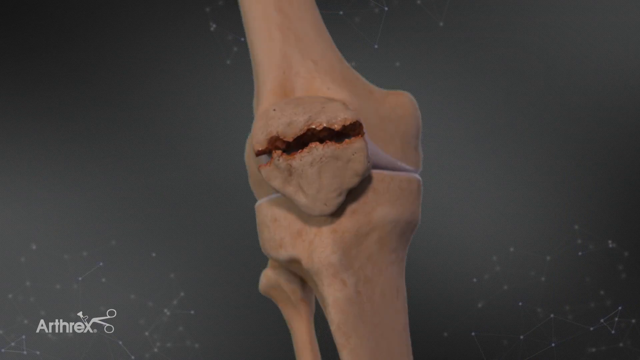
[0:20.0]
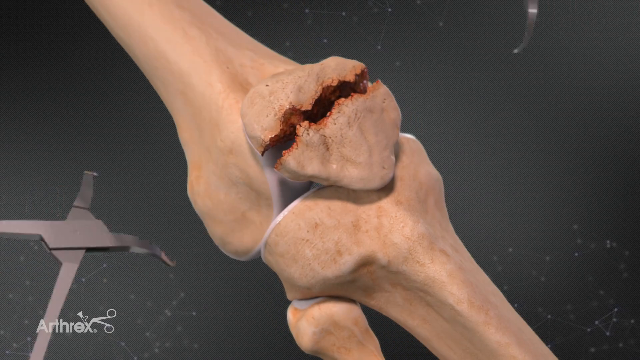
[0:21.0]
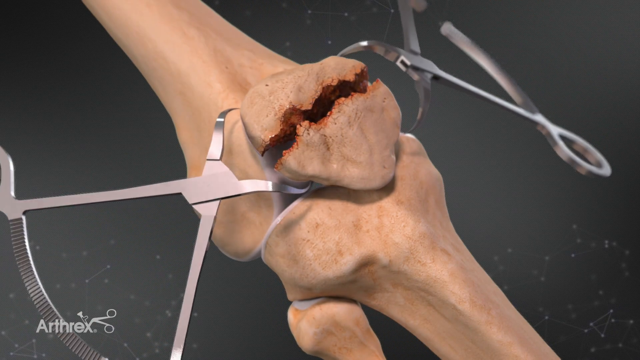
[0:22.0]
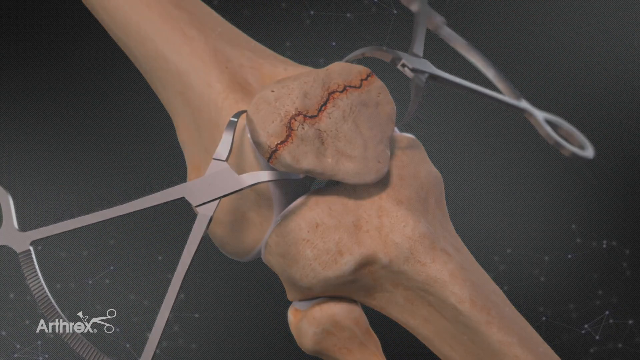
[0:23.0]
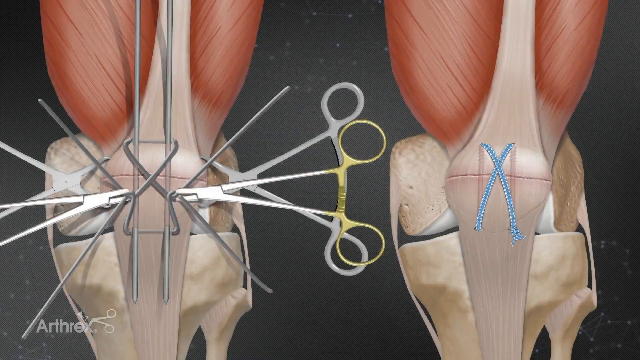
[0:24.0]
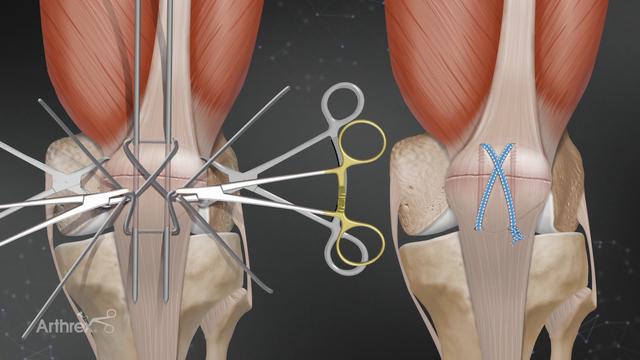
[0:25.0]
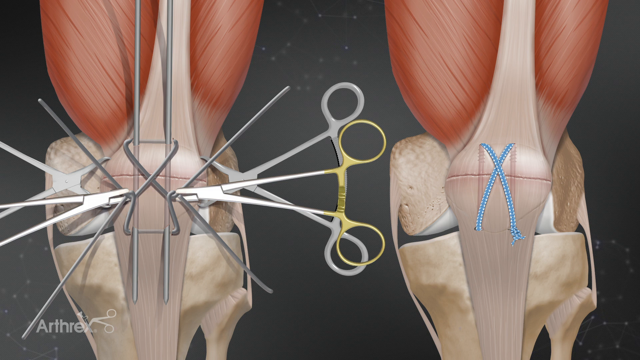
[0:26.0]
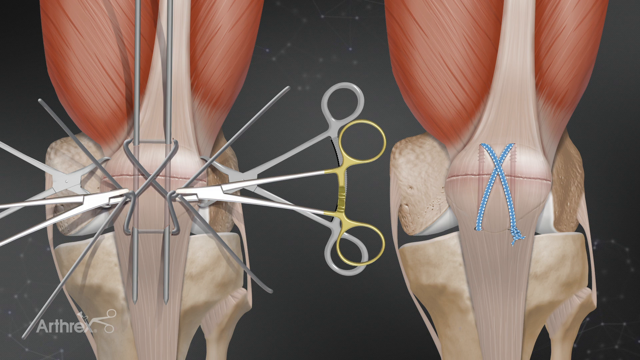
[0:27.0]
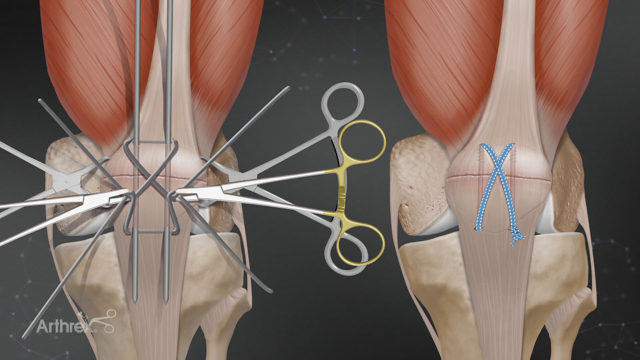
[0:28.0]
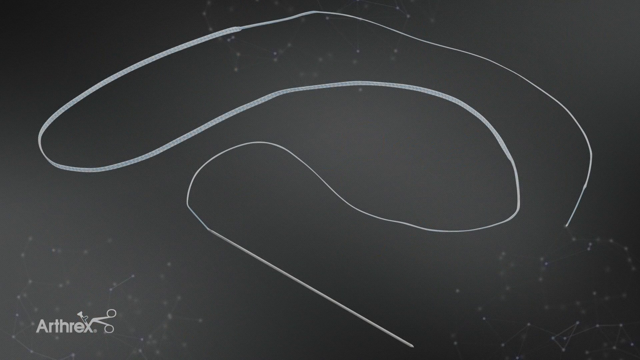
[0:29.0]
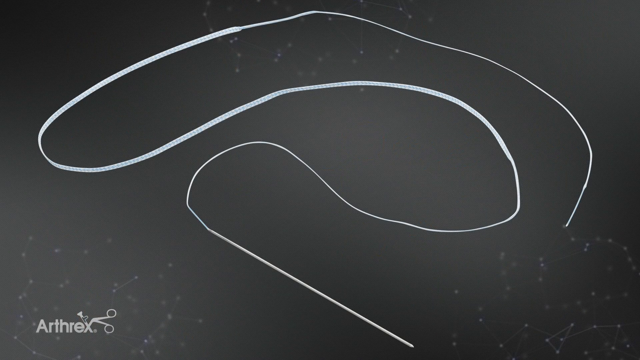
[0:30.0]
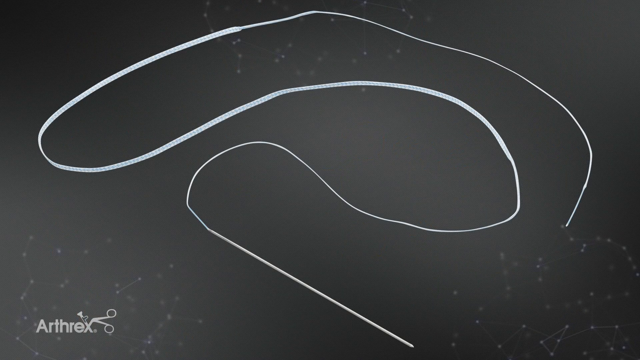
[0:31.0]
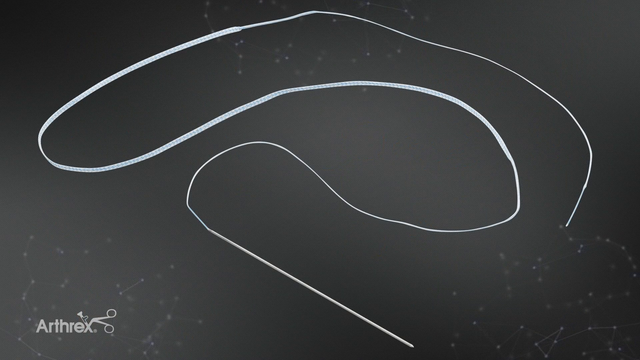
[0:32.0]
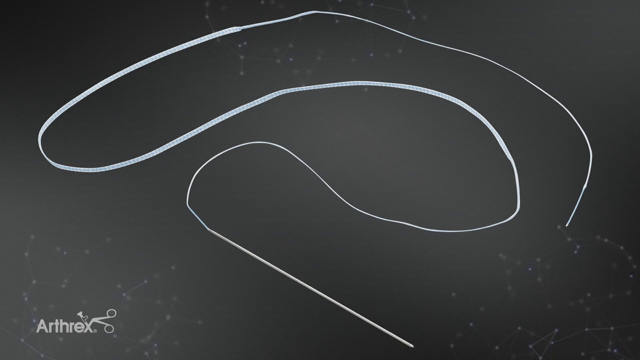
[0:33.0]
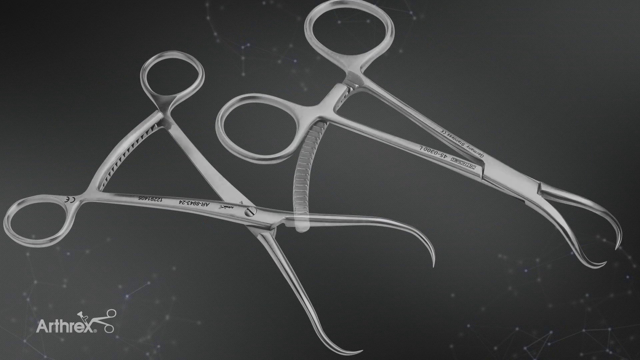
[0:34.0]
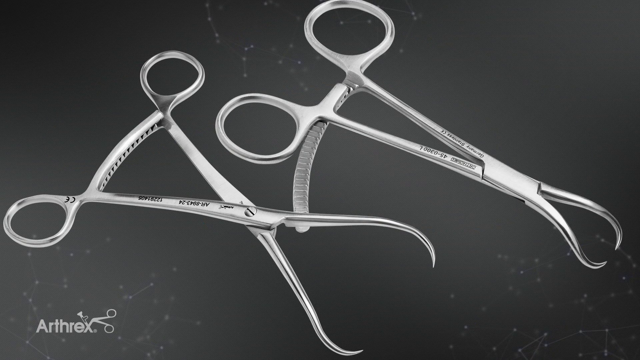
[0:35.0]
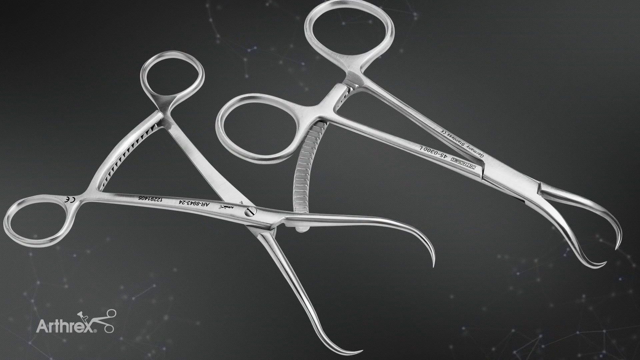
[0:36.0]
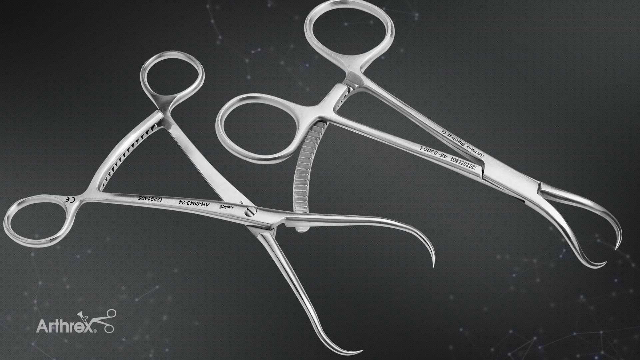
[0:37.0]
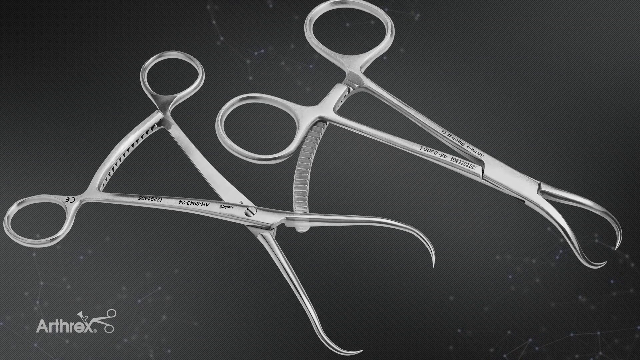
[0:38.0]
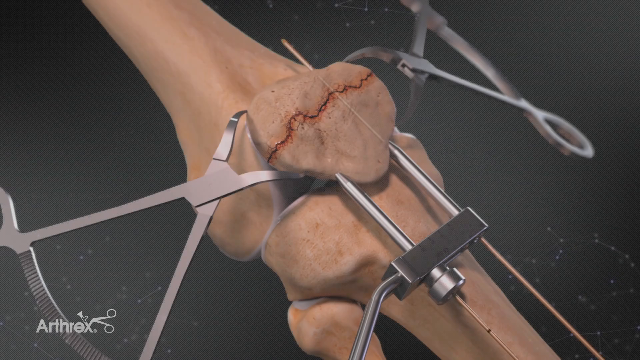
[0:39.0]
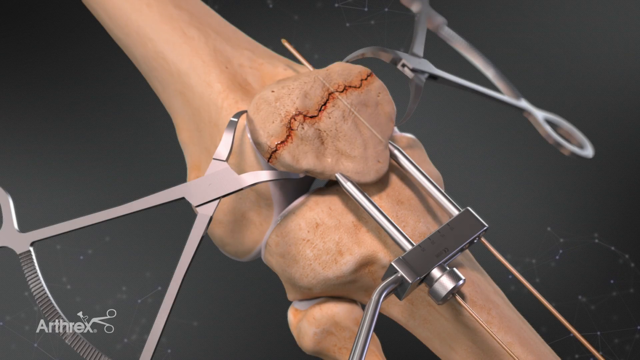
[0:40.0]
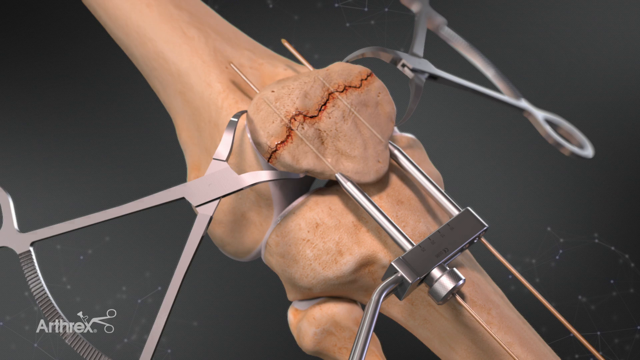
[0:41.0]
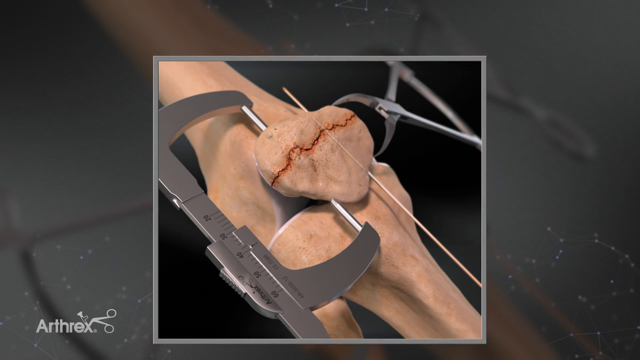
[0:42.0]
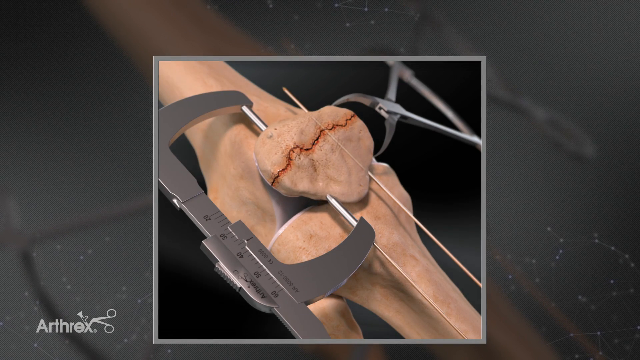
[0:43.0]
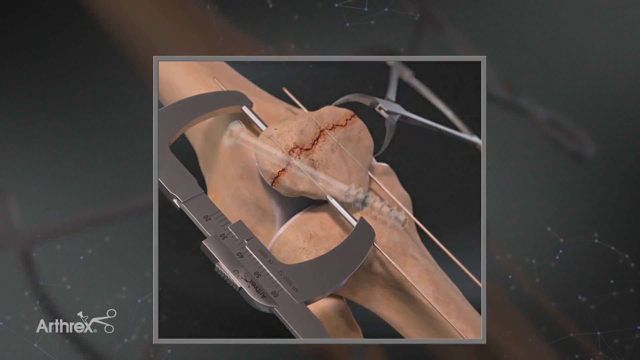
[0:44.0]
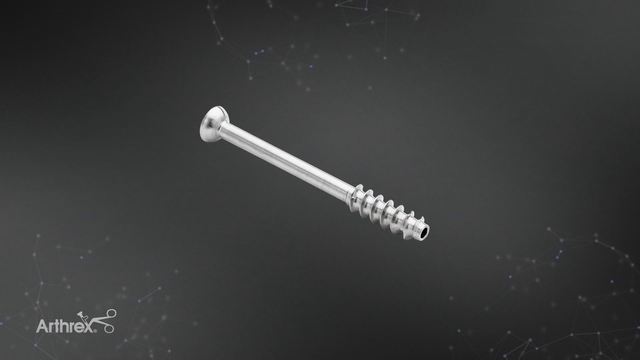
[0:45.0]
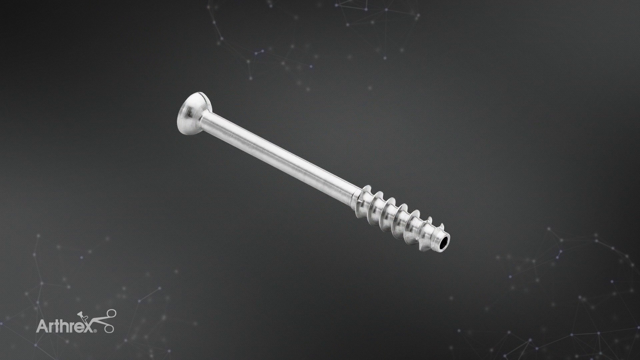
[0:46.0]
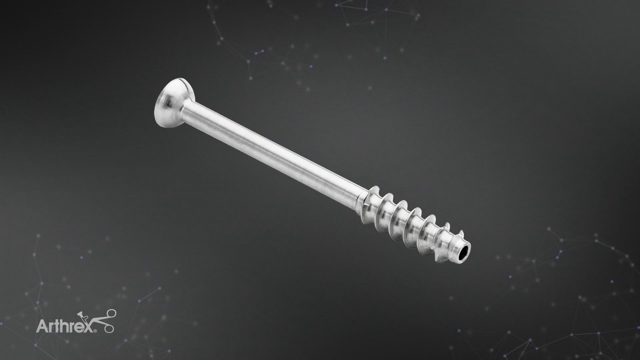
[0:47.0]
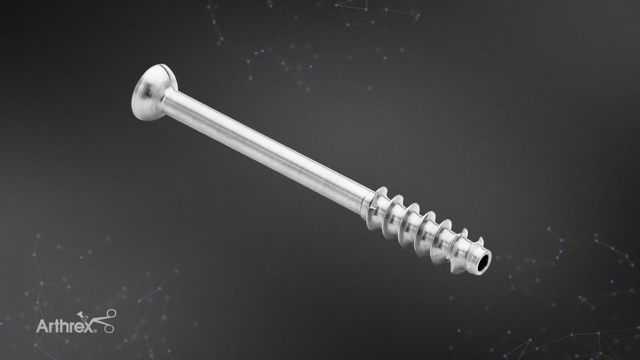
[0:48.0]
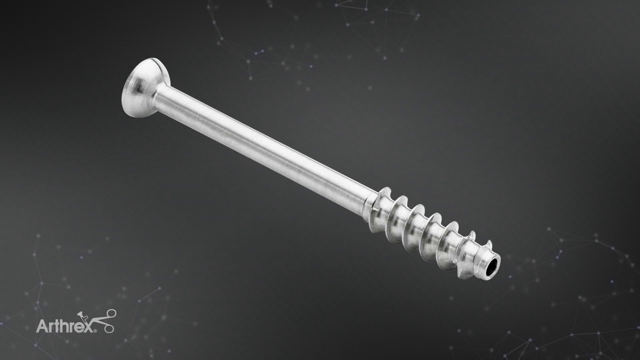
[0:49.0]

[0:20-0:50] A 3D representation of a slightly brown bone appears, seemingly the patella area of the leg. Two bones come together with the patella in the middle, and the patella is fractured down the middle. Two metal clippers or winches come in, attach to the patella and close it up. The scene transitions to a 3D diagram: on the left, the patella area with wires and clippers stuck on it; on the right, a stitch, shown by a blue cross being put there. A screen then shows a long white string. Next, a shot shows two big clippers or winches used to hold the patella. Another shot shows two wires being put through the patella by a metal device in the bottom right, a close-up of the same patella bone being held. Then a big, almost ruler-like device on the left puts nails or screws into the patella. Finally, a close-up shot zooms in on a screw.